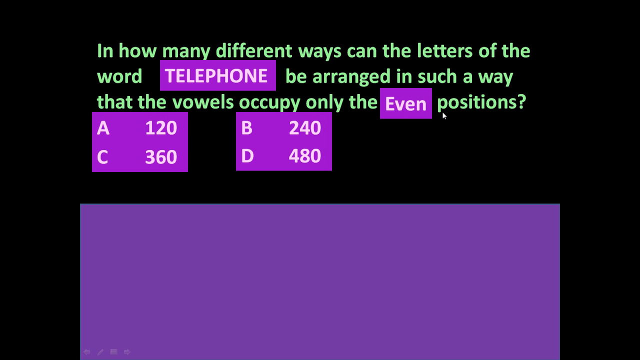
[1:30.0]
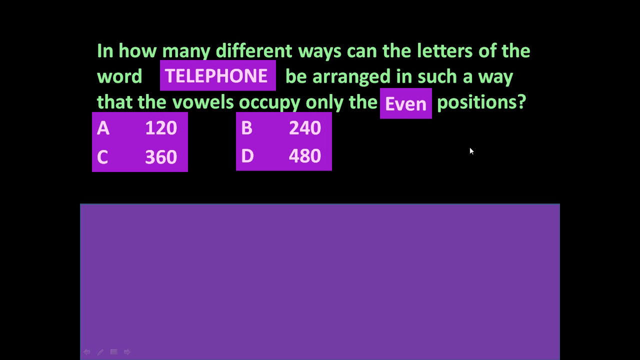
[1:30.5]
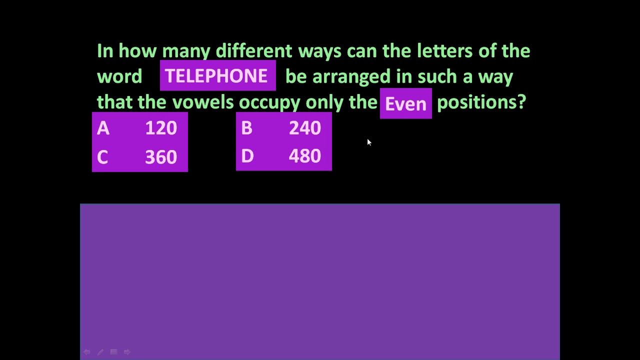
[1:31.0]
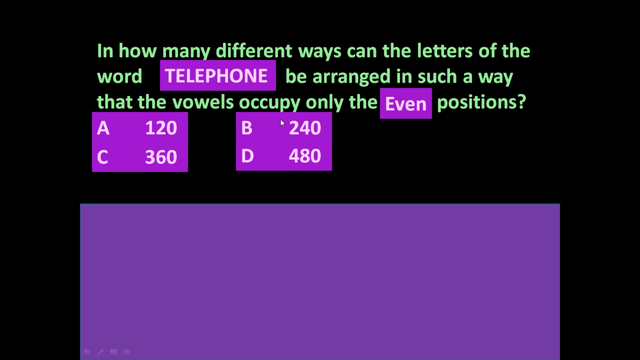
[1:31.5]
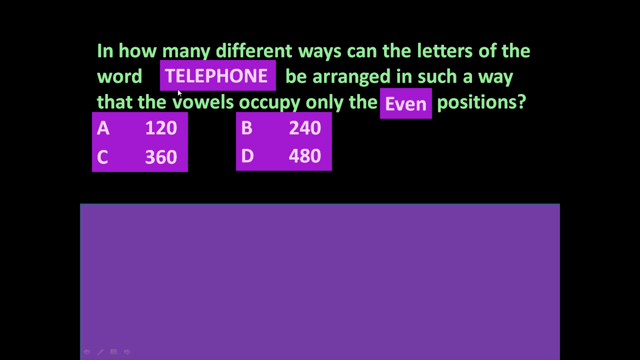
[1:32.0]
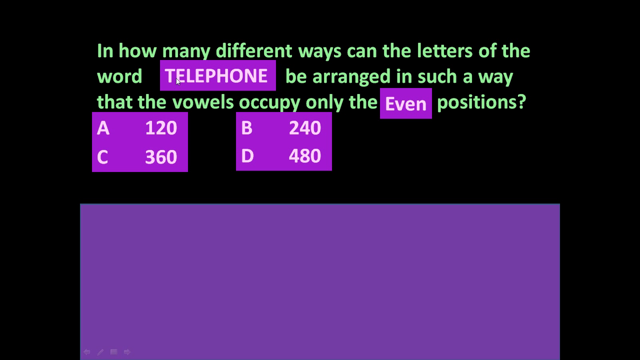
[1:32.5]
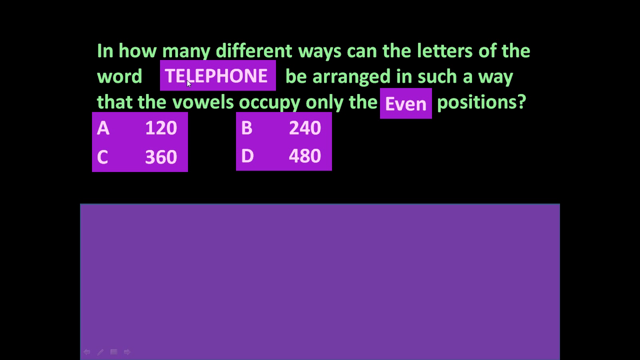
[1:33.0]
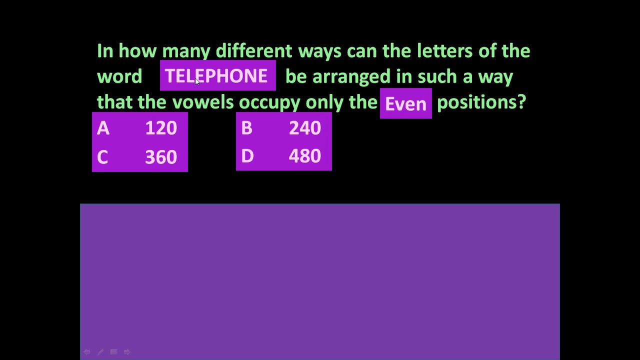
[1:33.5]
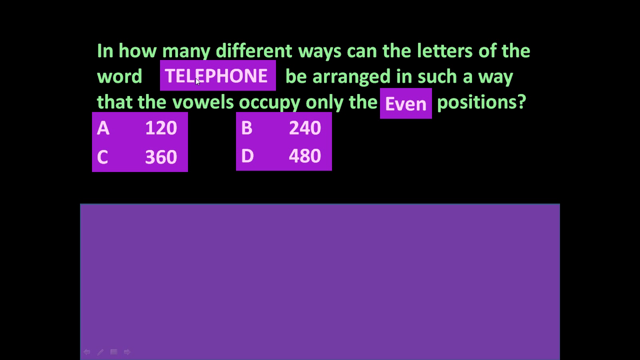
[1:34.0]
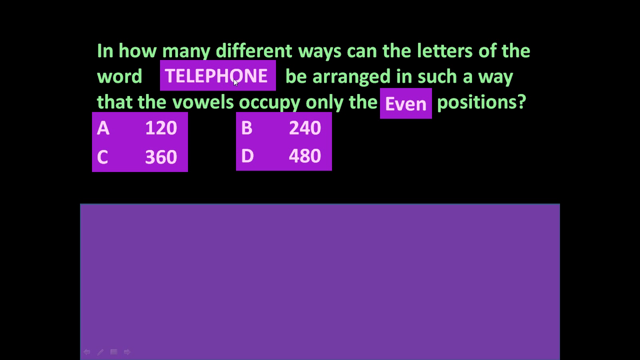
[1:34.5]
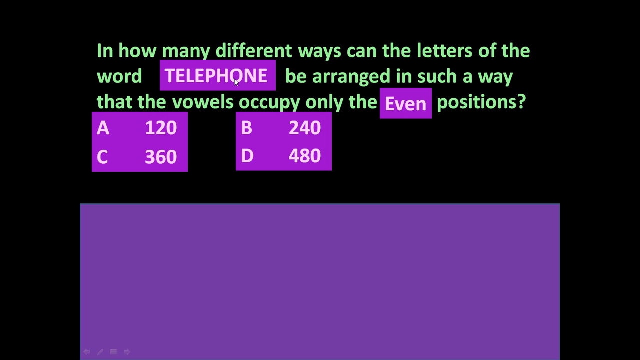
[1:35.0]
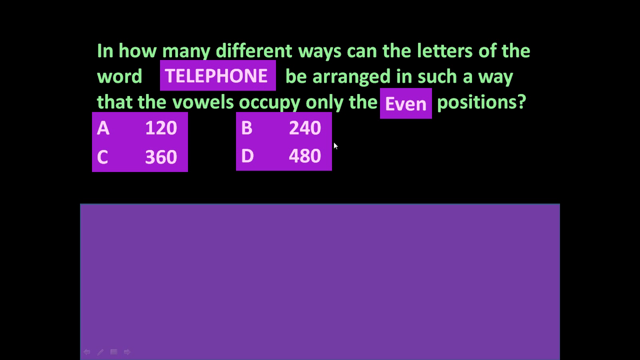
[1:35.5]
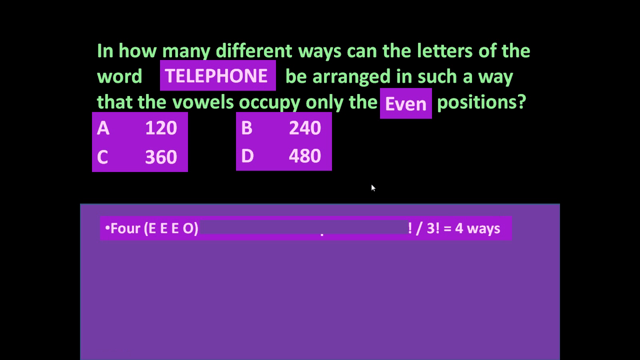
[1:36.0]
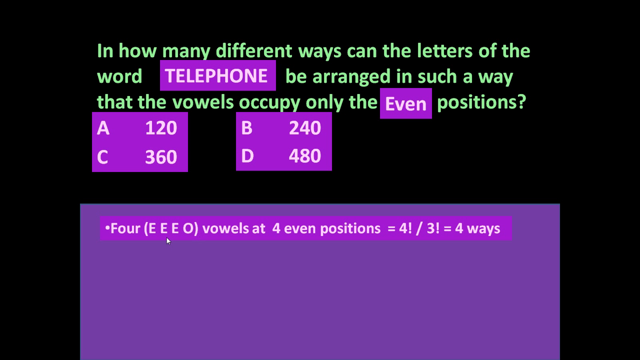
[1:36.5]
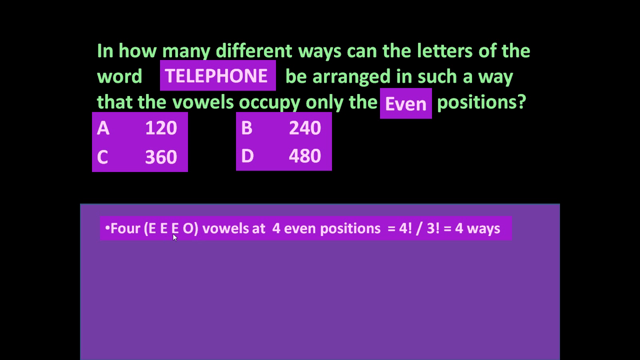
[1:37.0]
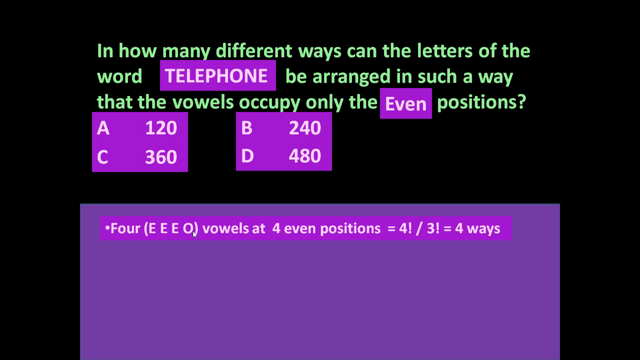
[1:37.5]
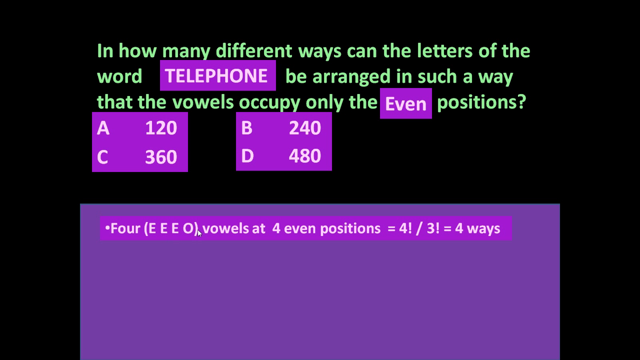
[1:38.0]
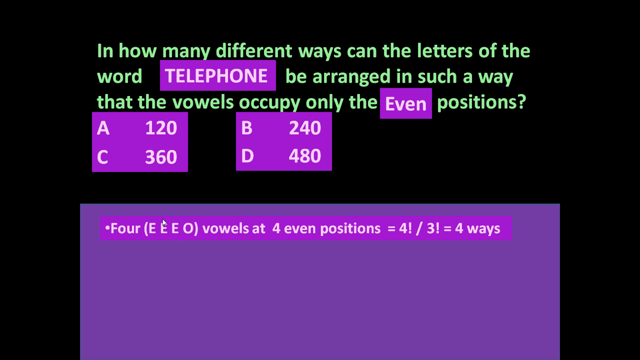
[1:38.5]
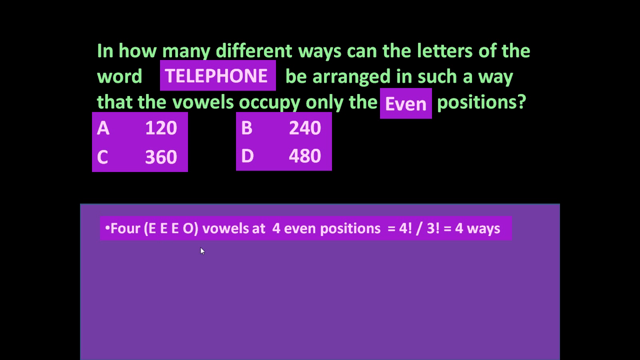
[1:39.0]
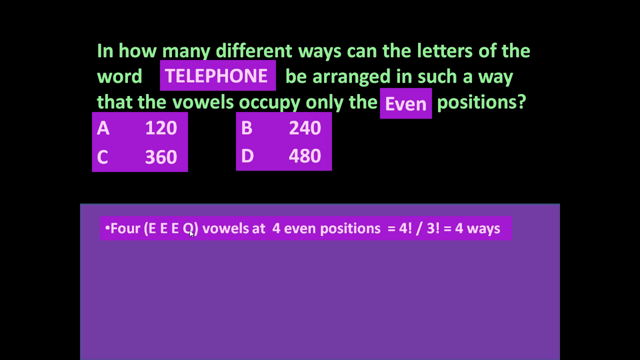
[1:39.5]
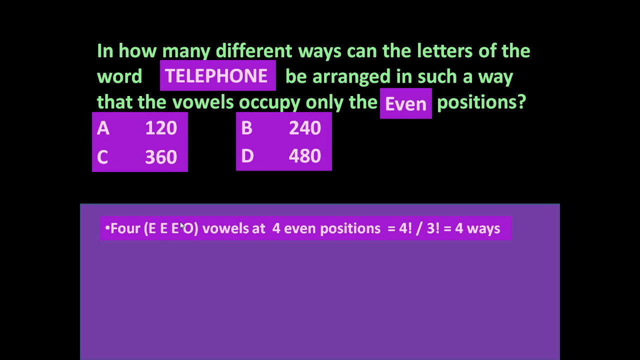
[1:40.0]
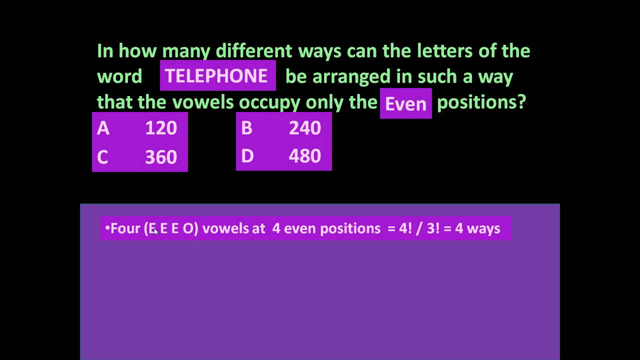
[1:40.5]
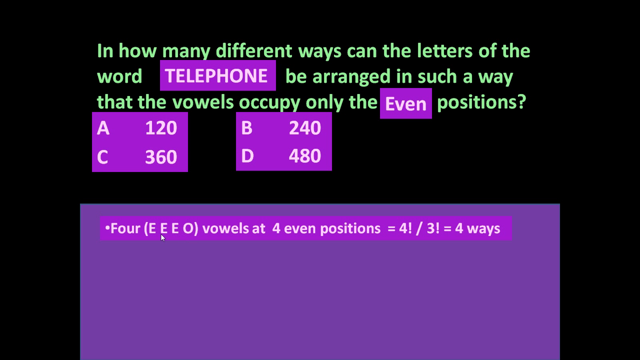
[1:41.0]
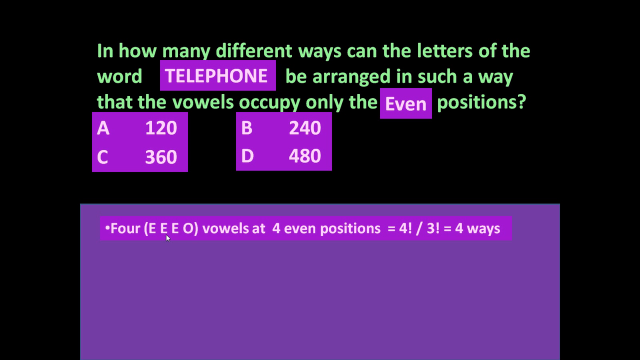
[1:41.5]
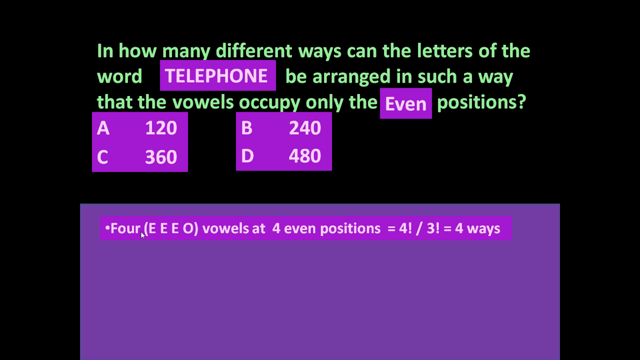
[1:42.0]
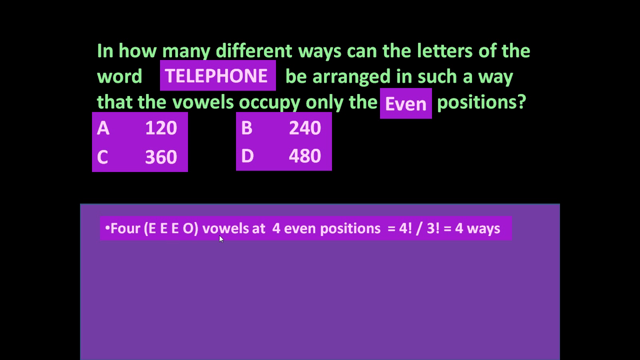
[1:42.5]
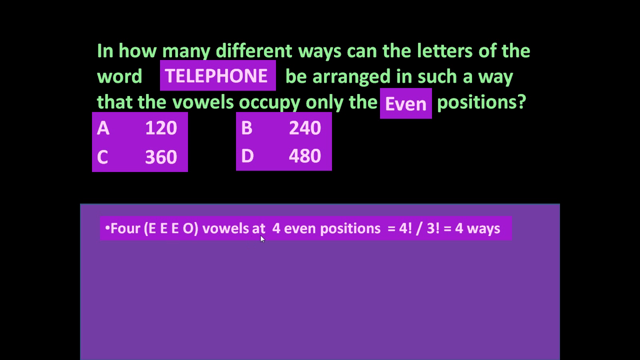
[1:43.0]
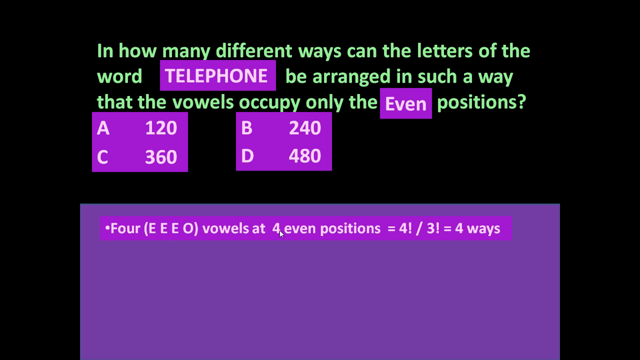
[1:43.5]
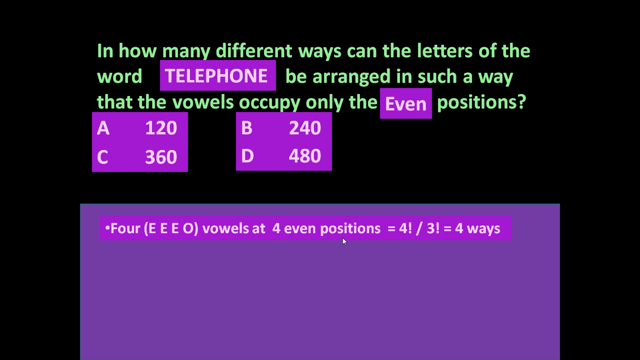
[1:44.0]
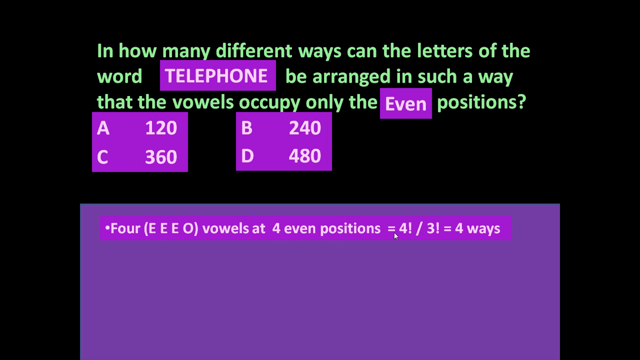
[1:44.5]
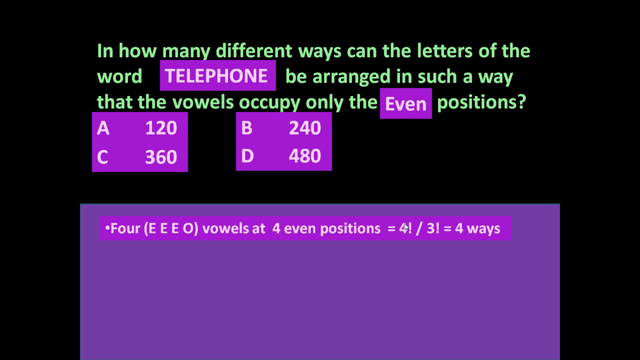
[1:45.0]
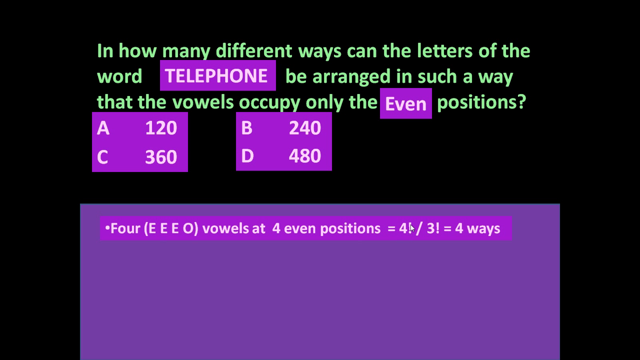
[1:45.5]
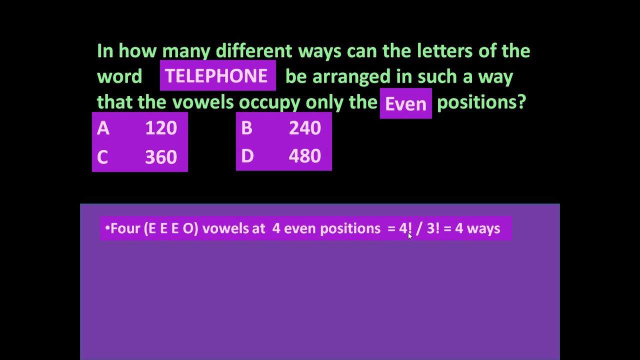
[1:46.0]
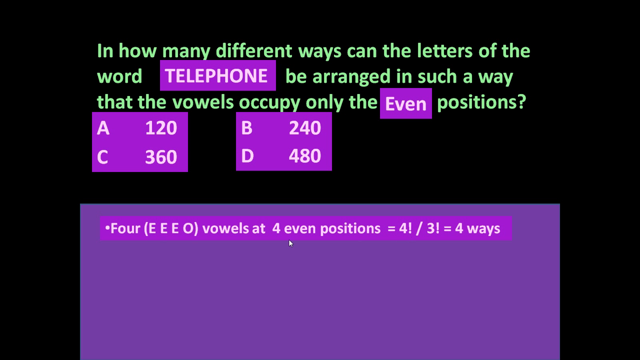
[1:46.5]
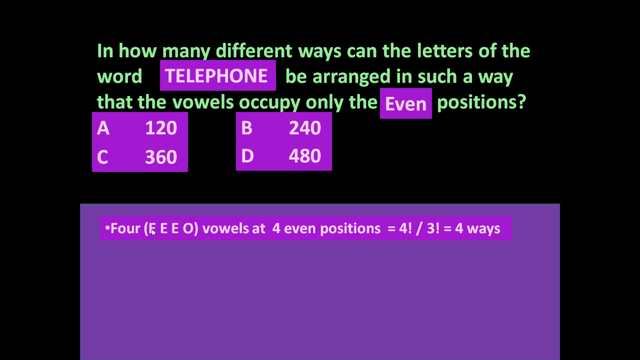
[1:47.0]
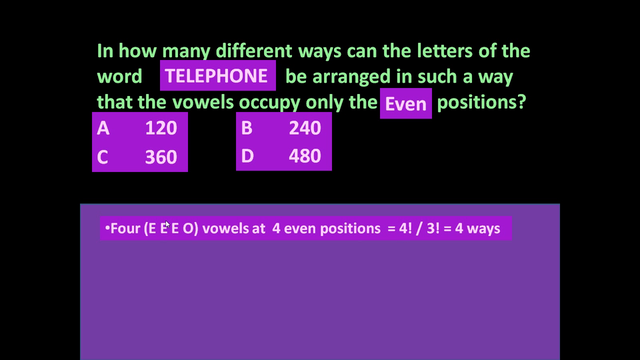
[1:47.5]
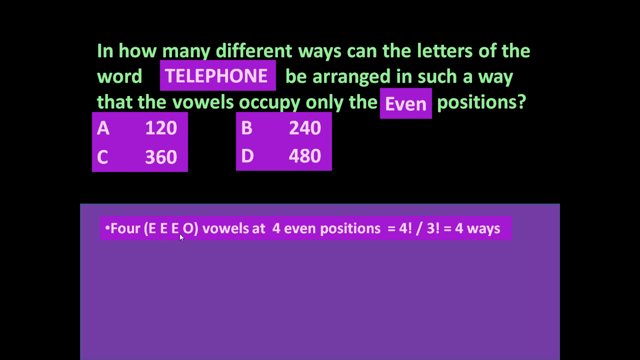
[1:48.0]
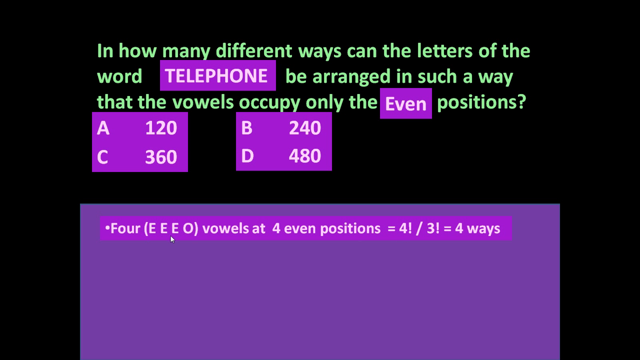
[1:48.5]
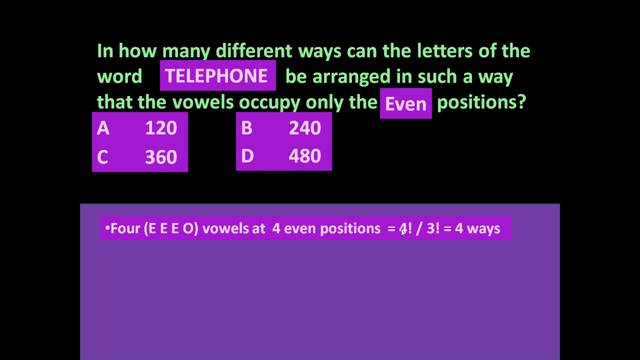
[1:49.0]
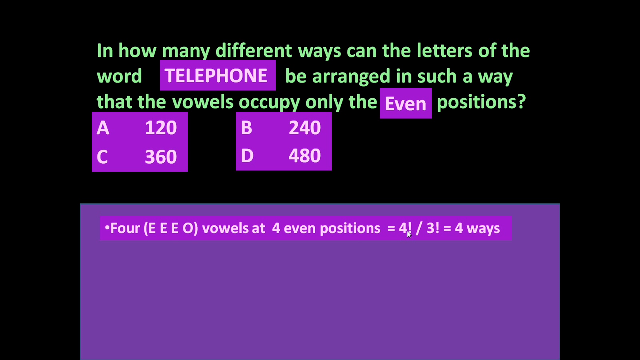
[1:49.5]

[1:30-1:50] On a black background, green text across the top reads "In how many different ways can the letters of the word TELEPHONE be arranged in such a way that the vowels occupy only the even positions?" The word TELEPHONE is in all caps, highlighted in a purple box with white printing, and the capitalized word Even is also highlighted in a purple text box with white printing. Below are two rectangles containing answers: the left one reads "A120" on top with "C360" below, and the right one reads "B240" and "D480." Below them is a purple rectangle that starts out blank. The cursor moves around and highlights the word TELEPHONE. Then a darker purple text box with white print appears in the blank rectangle, reading "Four (E E E O) vowels, at four even positions, equals four!/ three! equals four ways."